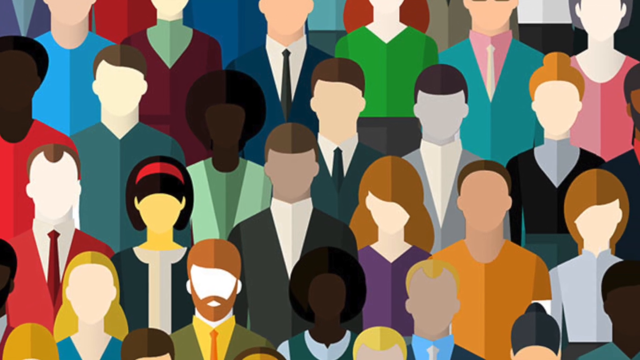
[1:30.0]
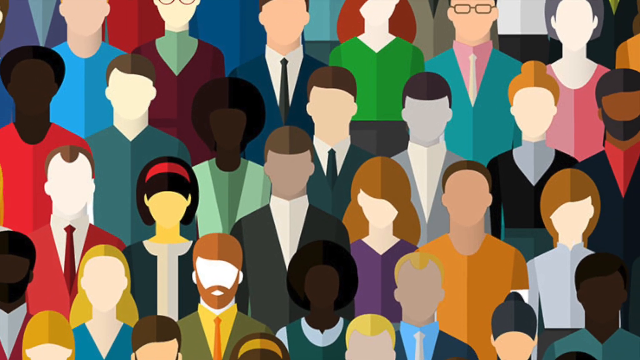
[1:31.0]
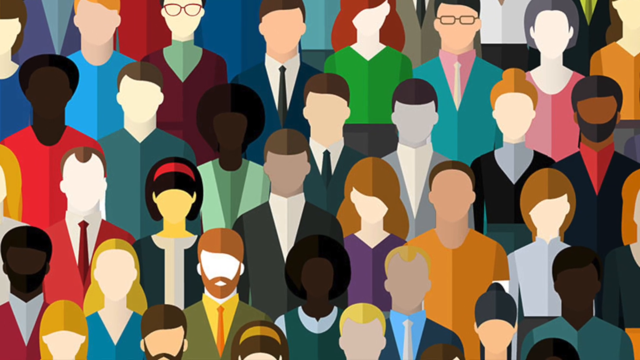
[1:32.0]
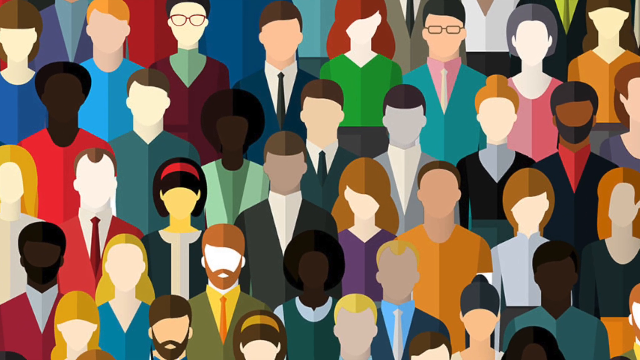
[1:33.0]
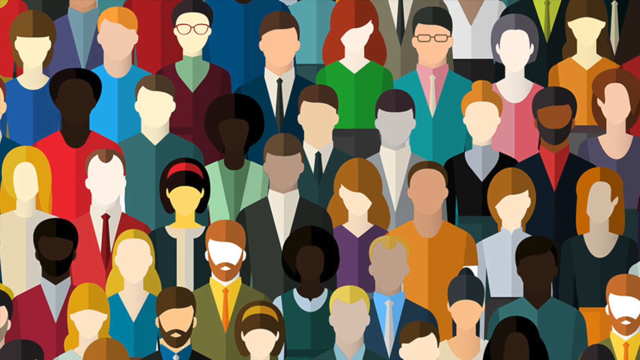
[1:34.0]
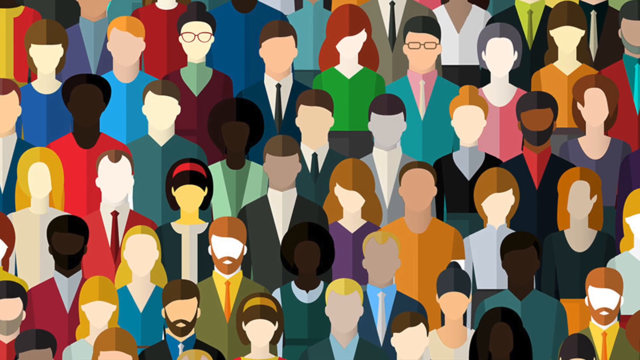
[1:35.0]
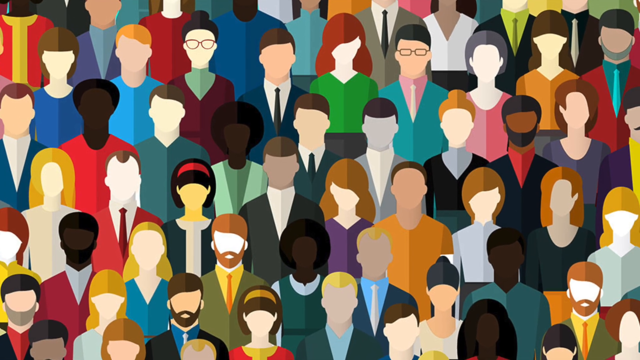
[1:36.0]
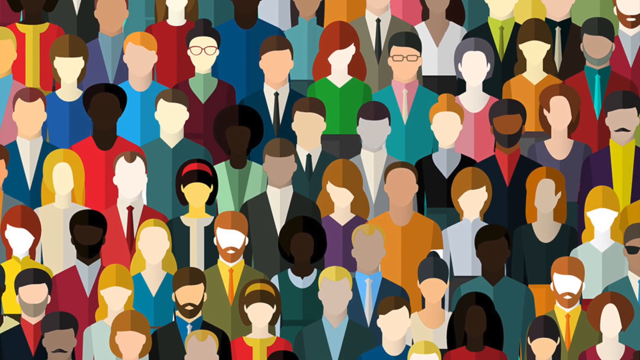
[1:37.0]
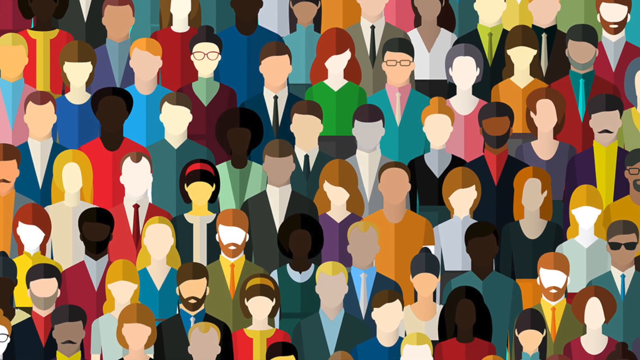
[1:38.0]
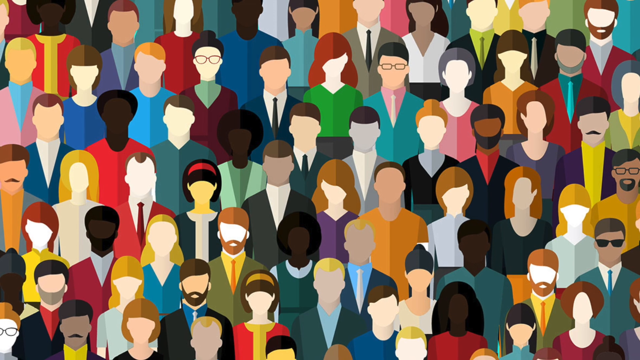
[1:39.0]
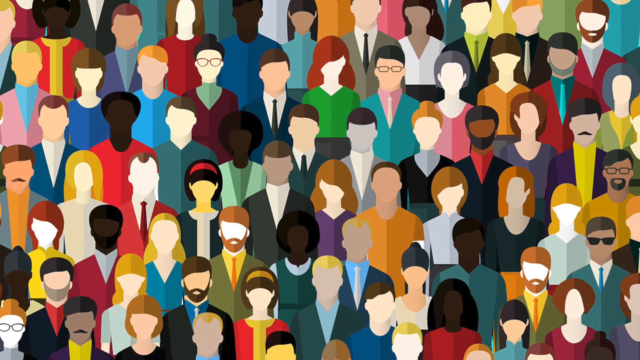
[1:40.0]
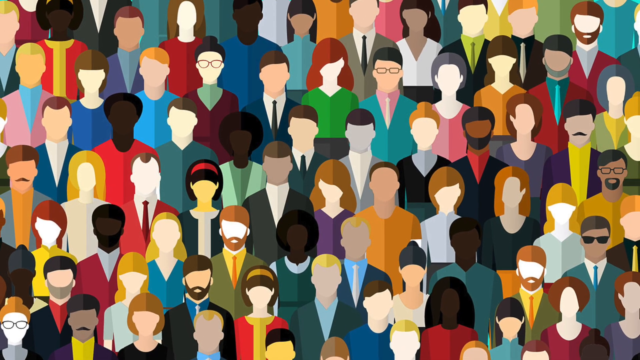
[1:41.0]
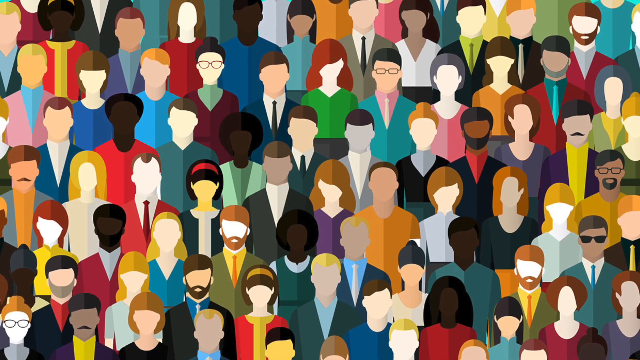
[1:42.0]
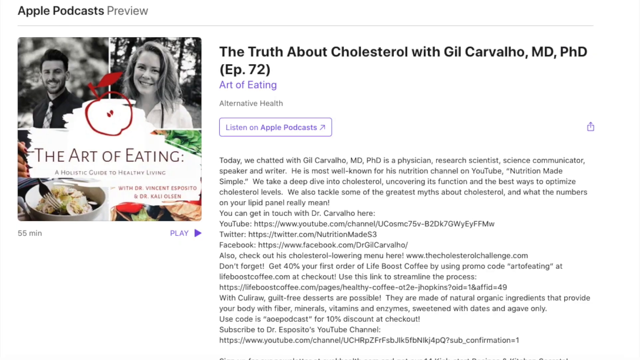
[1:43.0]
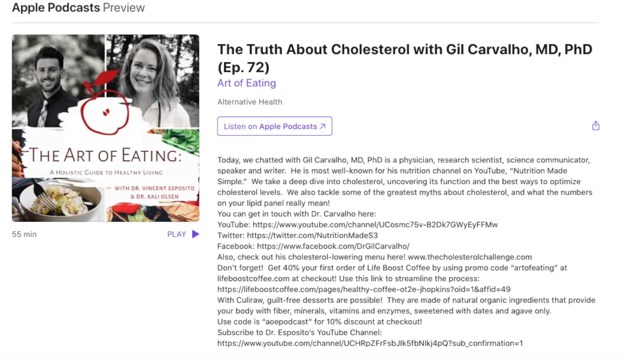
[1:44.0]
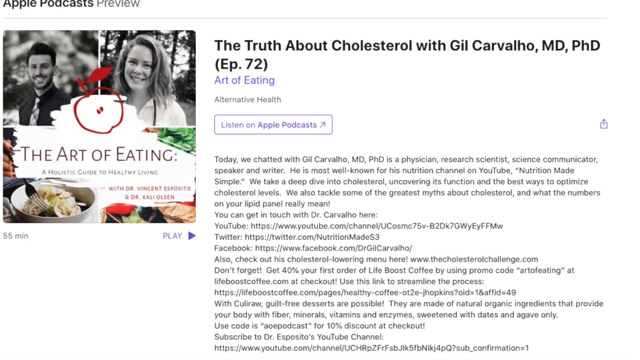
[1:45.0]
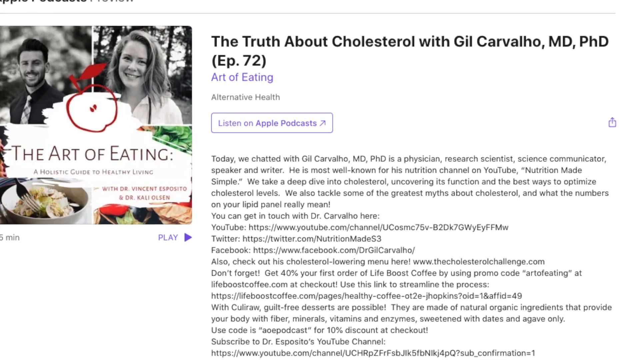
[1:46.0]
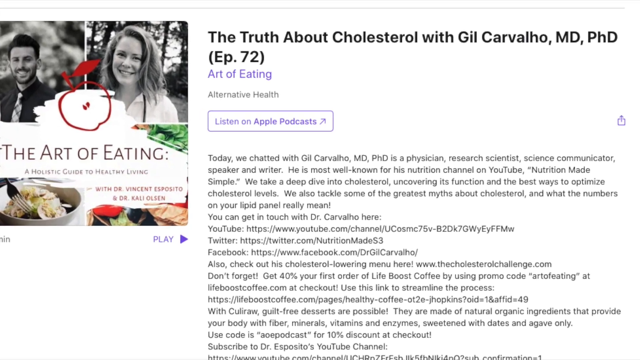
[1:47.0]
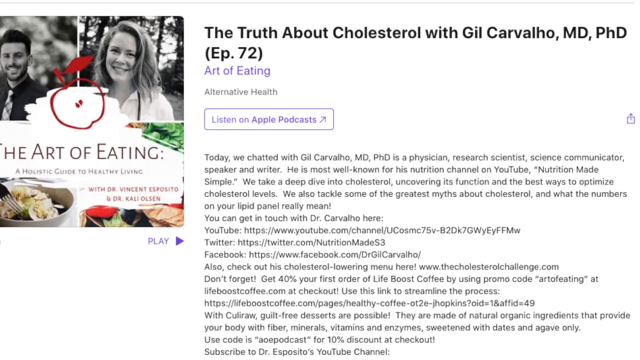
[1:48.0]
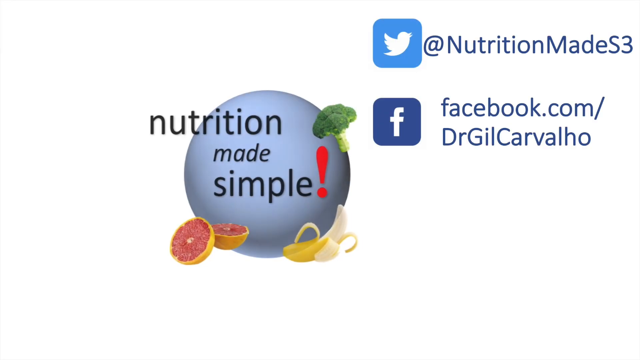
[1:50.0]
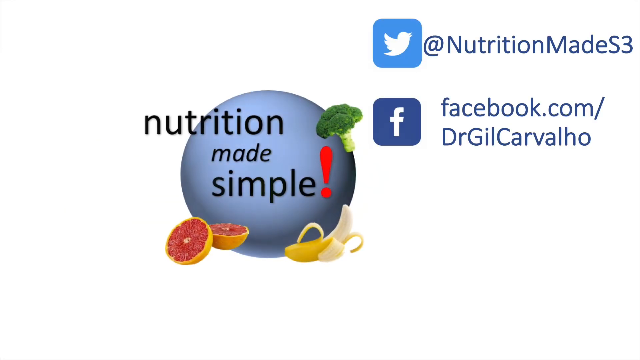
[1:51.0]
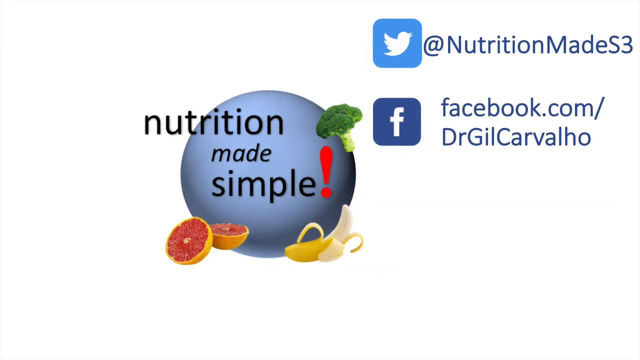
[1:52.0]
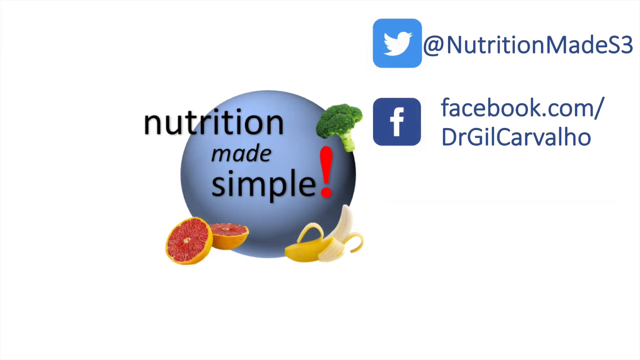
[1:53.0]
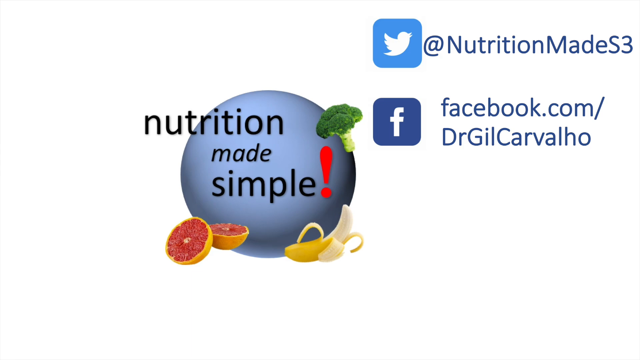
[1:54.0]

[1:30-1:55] Rows of illustrated people, all adults, fill the image: approximately six rows of unusual faces, people standing close together, all dressed rather professionally. The men wear suits, white collared shirts, ties or sweaters, and the women seem to be dressed up as well. Their skin colors range from very peachy pale to rather dark brown. The camera pulls away to show more people, a very diverse population, all adults. The image then leaves, and a book appears on the left. Its front cover shows a young man on the left, approximately in his 30s, with a beard, mustache, dark hair, glasses and pale skin, wearing a business shirt. To his right is another black-and-white photo of an attractive woman with hair parted on her right, reaching her shoulders; she also looks to be in her 30s, smiling, in a white shirt. Below is the book's title, "the art of eating a holistic guide to healthy living with Dr. Vincent Esposito and Dr. Callie Olson." A white screen then suddenly opens, with a blue circle in the center bearing black text that reads "Nutrition Made Simple." Below left of the circle is a sliced-open grapefruit; to the right is a half-peeled banana leaning toward the right; in the upper right corner is a floret of broccoli. In the upper right of the screen is the Twitter bird icon with the text "at Nutrition Made S3," and below that the Facebook icon, with blue text reading "Facebook.com Dr. Gil Carvalho."